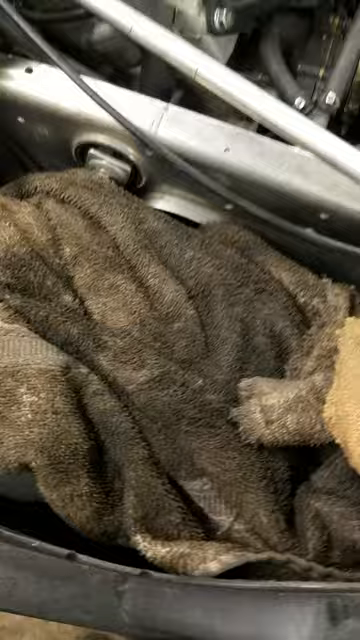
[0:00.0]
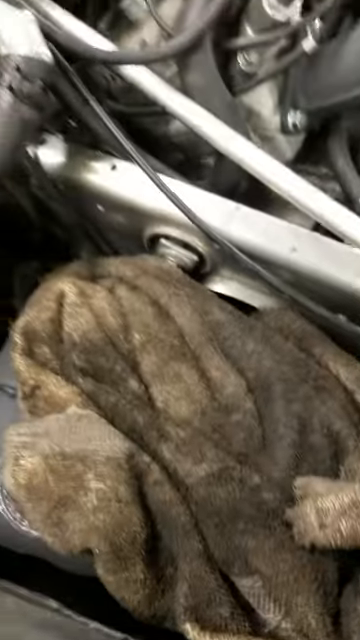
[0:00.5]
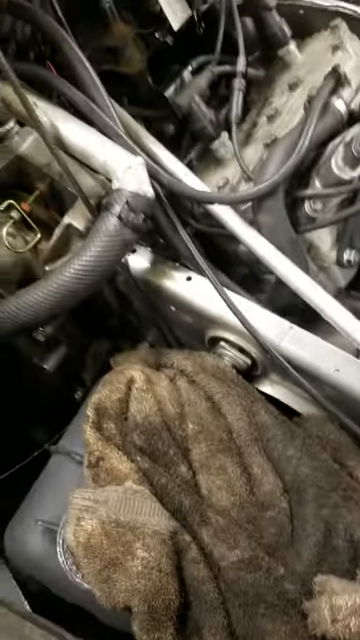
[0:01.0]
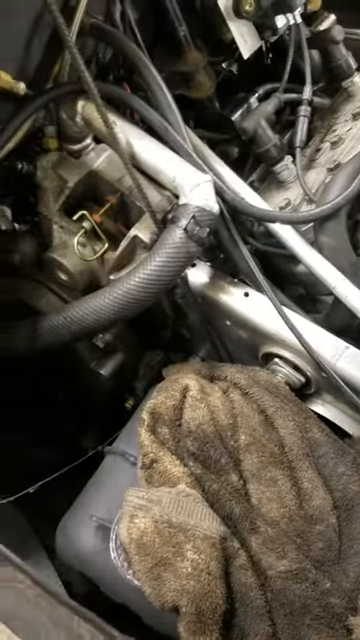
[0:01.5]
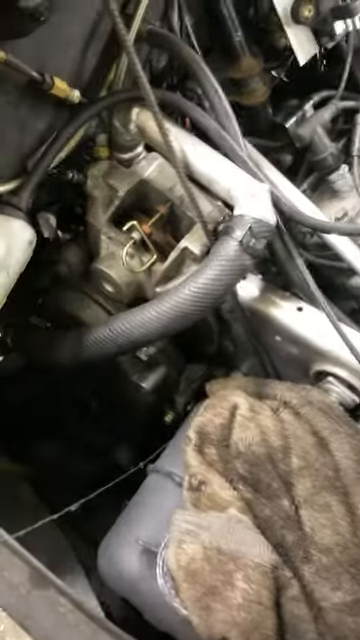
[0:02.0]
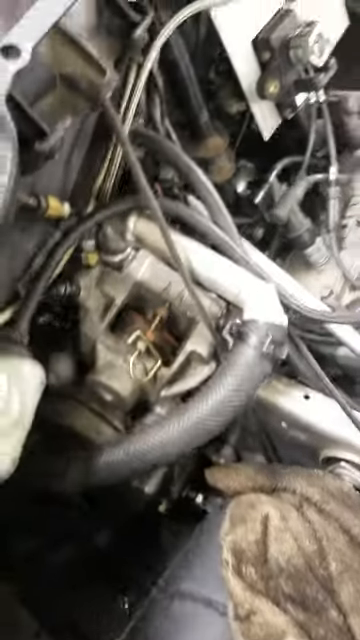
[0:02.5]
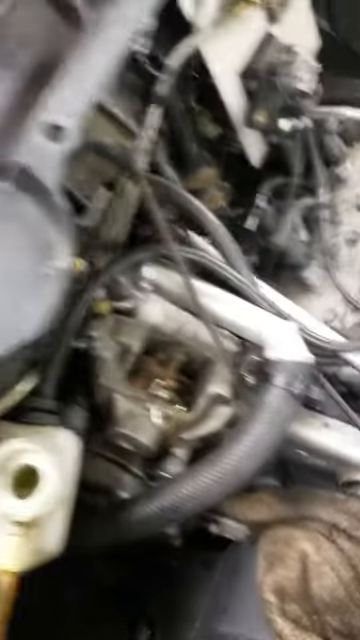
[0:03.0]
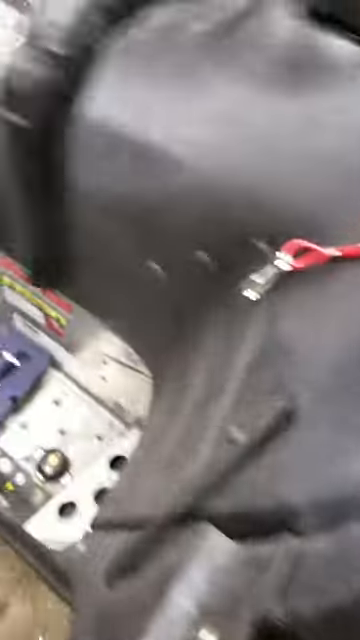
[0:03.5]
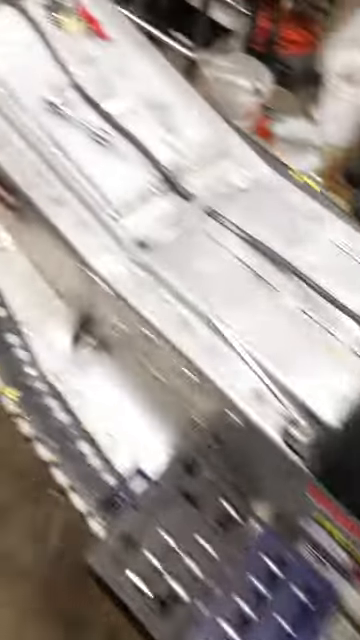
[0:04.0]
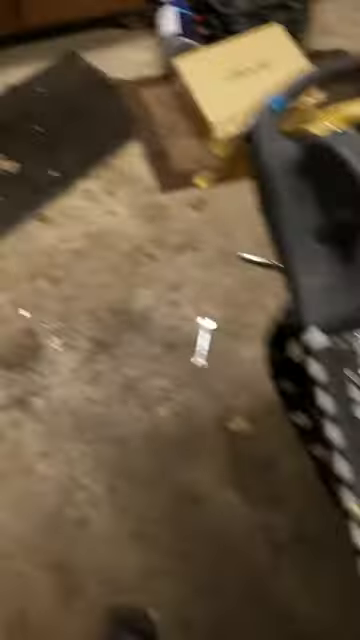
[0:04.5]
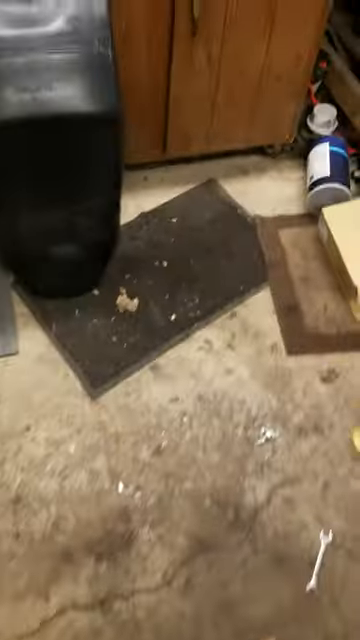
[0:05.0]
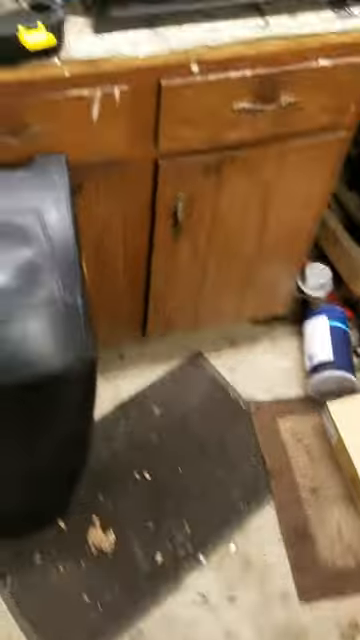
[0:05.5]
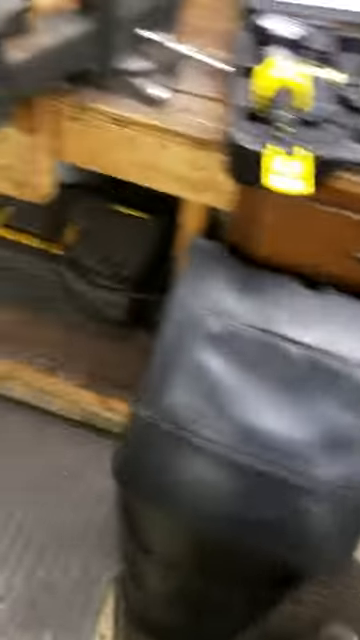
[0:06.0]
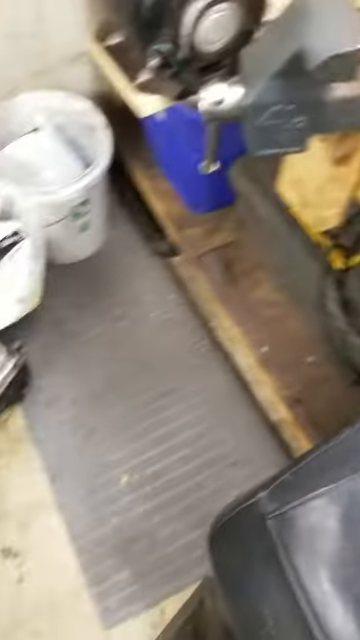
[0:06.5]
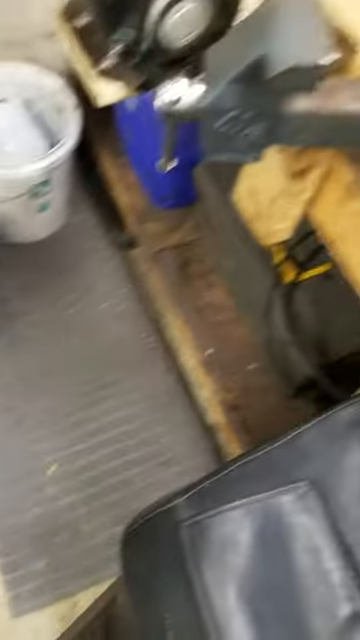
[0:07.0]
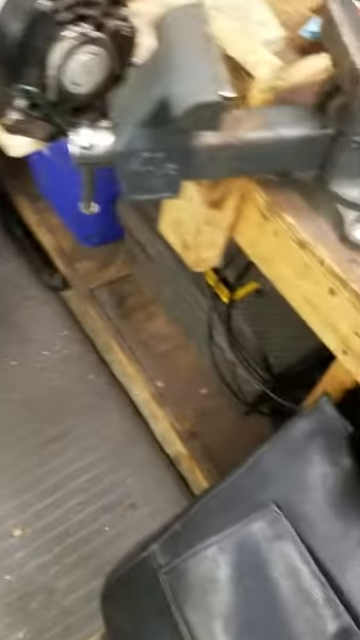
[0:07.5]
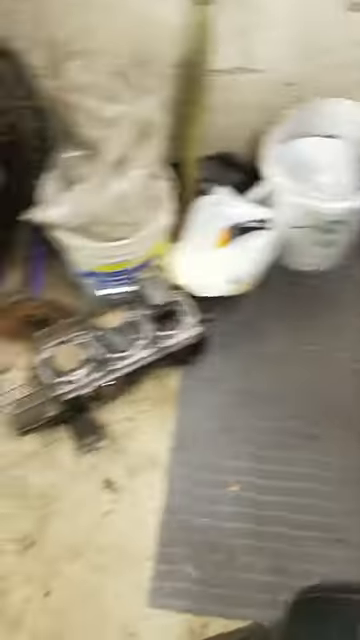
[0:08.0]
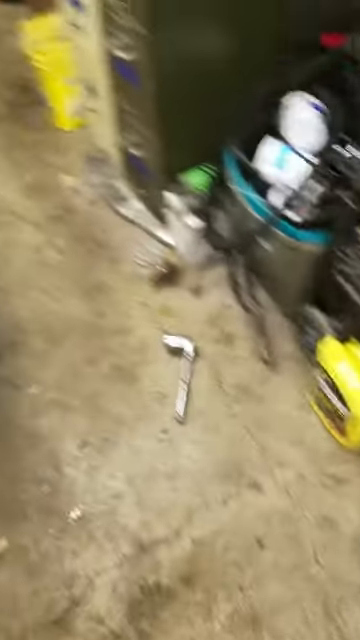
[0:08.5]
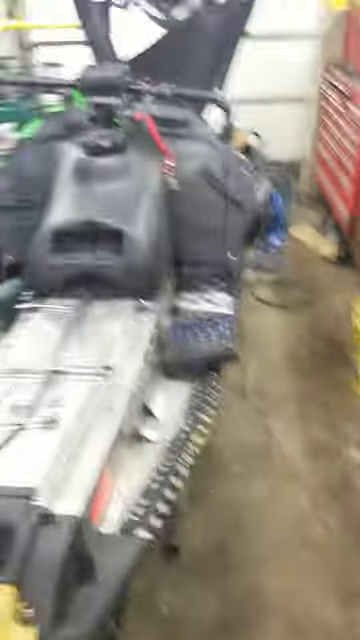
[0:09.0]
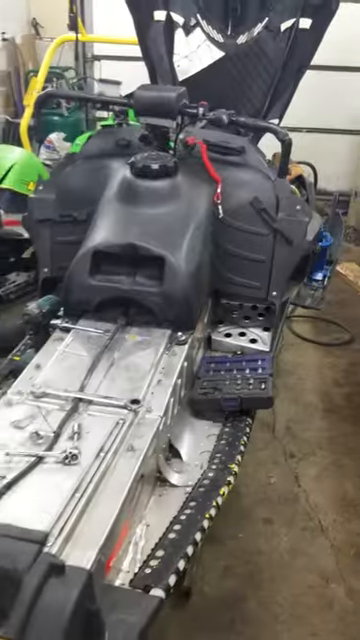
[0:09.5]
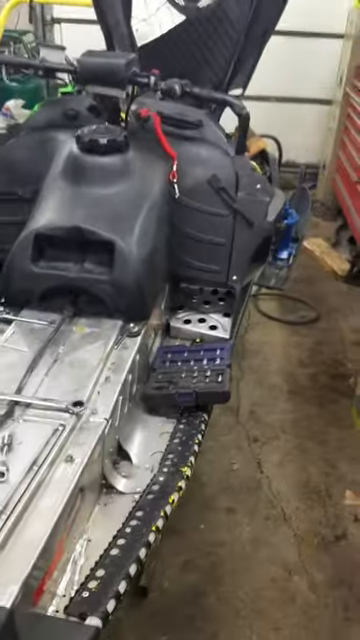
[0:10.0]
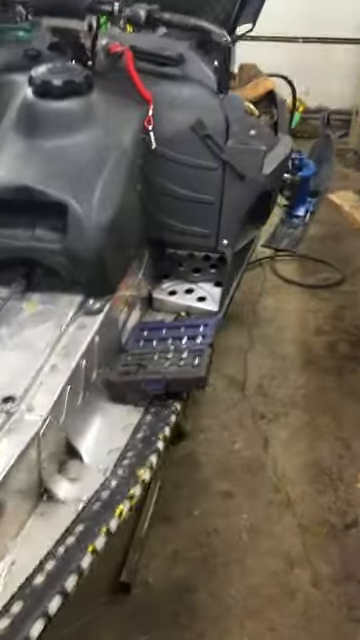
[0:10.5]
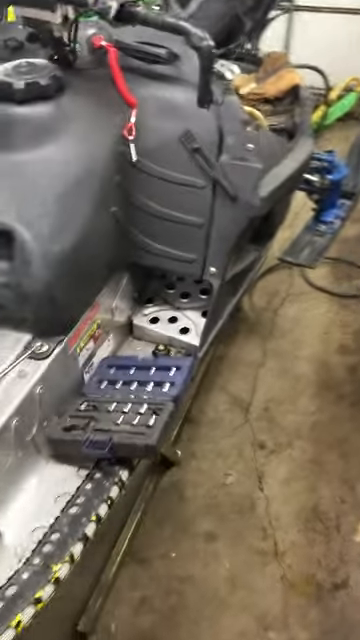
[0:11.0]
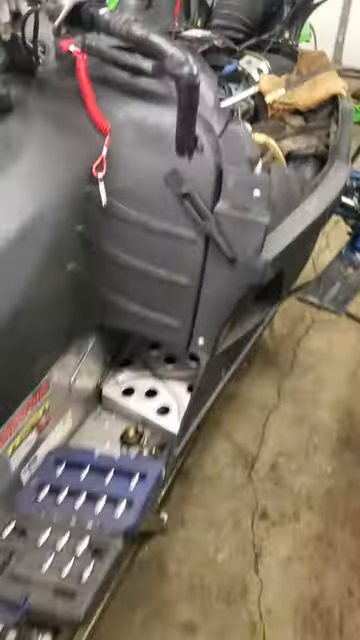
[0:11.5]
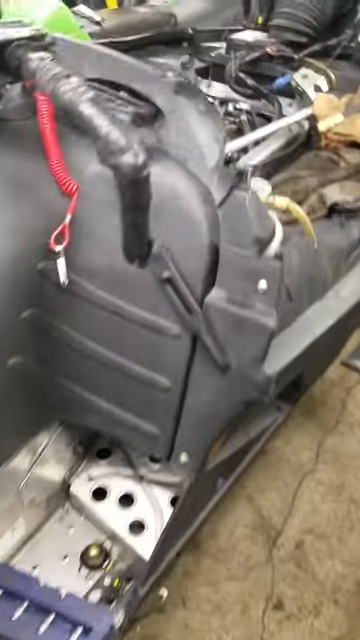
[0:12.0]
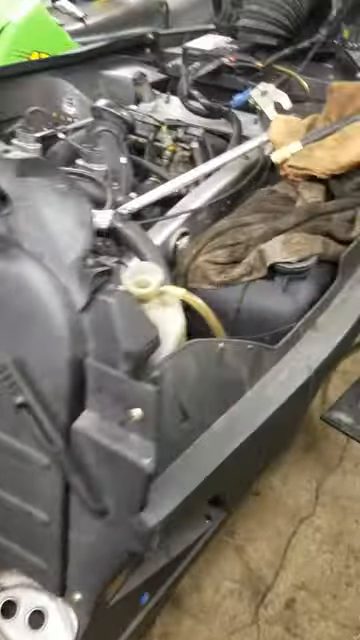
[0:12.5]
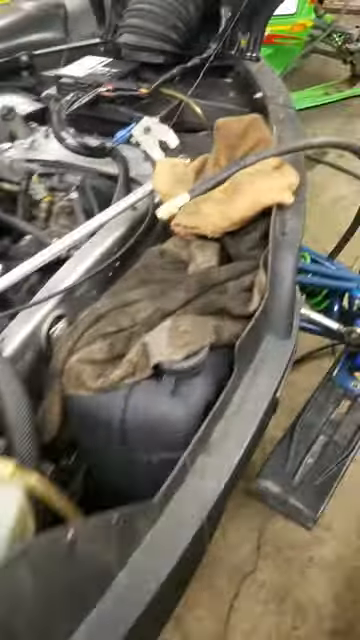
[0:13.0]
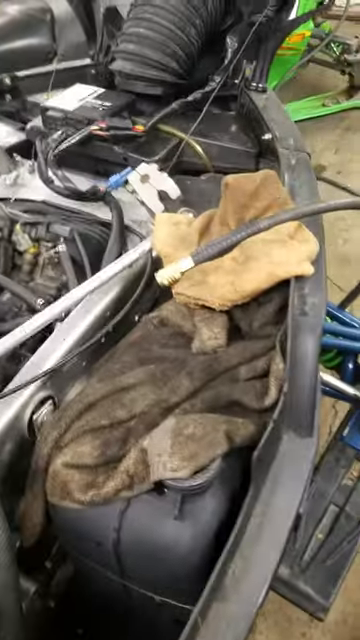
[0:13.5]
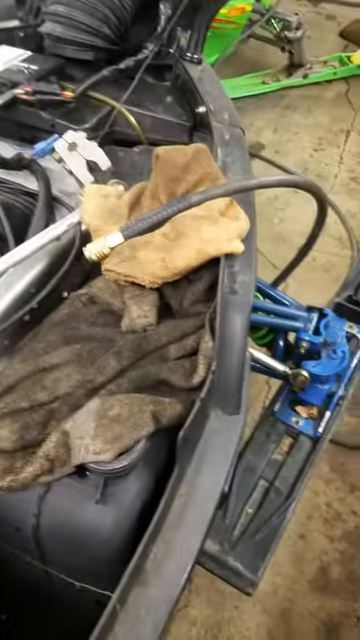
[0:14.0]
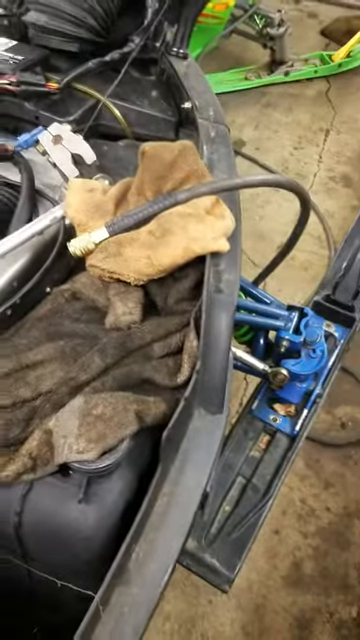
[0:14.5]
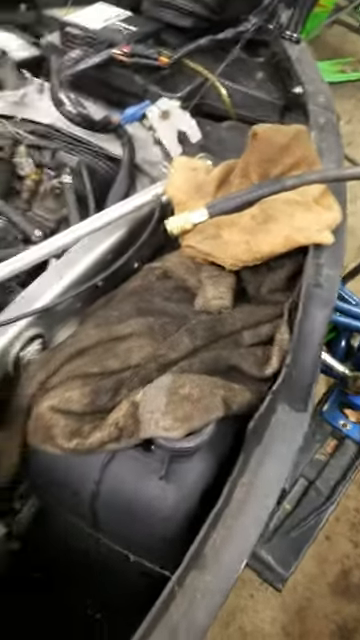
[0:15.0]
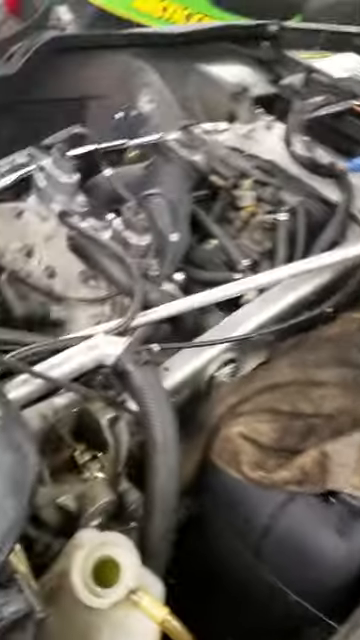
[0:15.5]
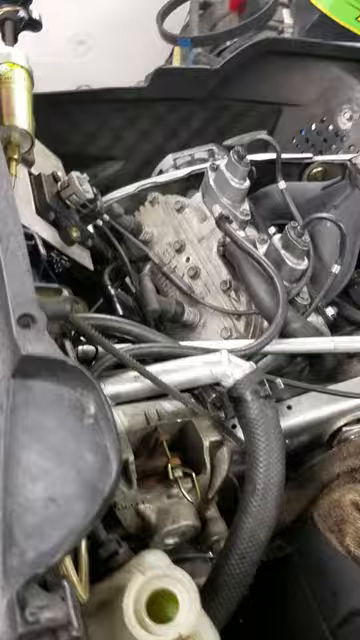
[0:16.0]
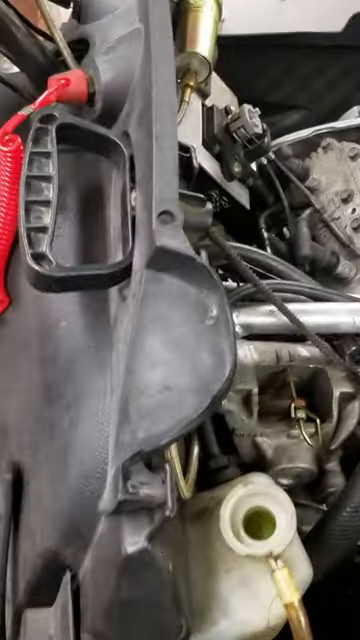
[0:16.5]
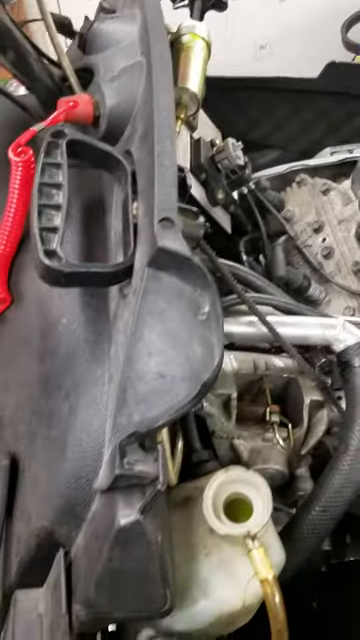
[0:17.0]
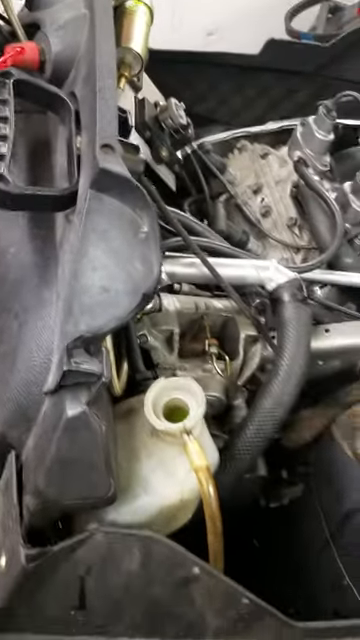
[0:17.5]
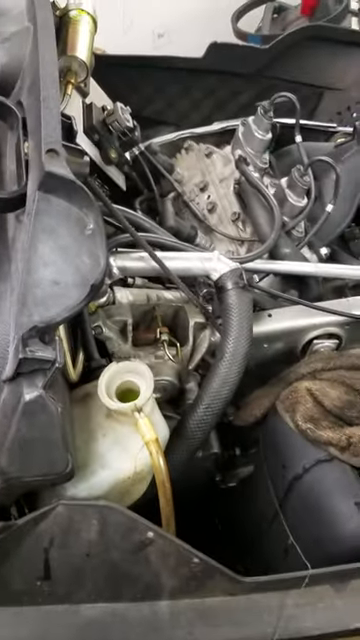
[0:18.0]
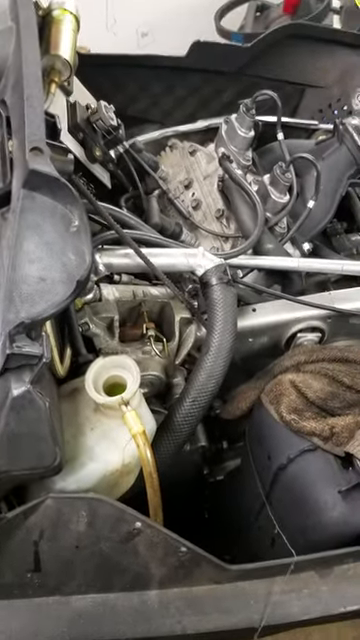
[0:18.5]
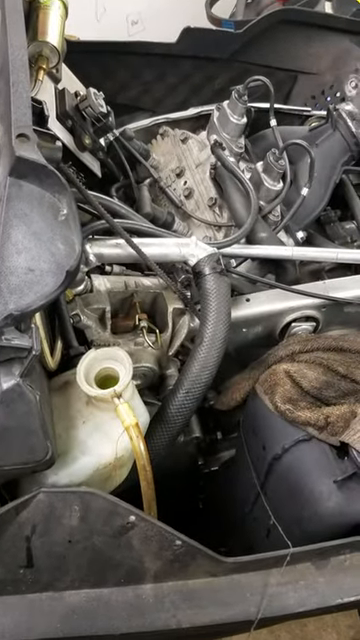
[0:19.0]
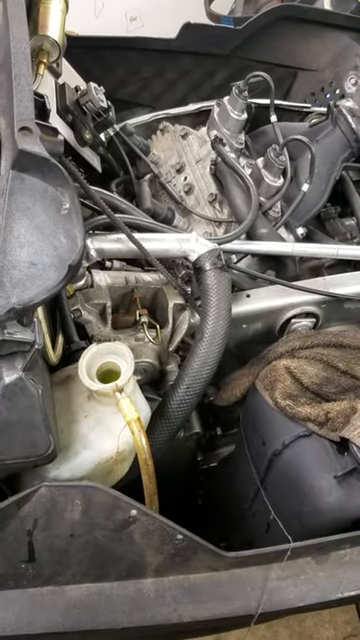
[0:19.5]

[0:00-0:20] Part of a car is visible, with an old towel kind of off to the side. The towel is very filthy and dirty; it looks like it was once white and now has gray and brown on it, toward the lower part of the frame. Toward the top is something mechanical, and it looks like the towel was maybe used to clean that device. The person filming moves forward and kind of walks around, and cupboards are visible in the background; this appears to be a garage. A very large inner portion of what may be some sort of engine is visible, with hoses and electrical wires in the background and nuts, bolts and screws holding things together in the back area. There is some white on the inside, while the whole outside is gray. The camera pans so quickly that it is hard to tell, but it looks like it could be the inner part of an engine. No full truck is visible, so the engine has maybe been taken out to be worked on.